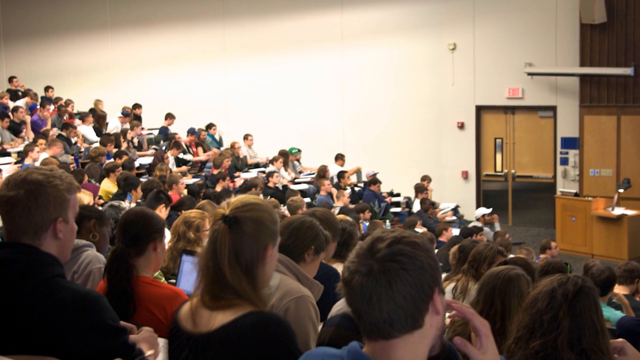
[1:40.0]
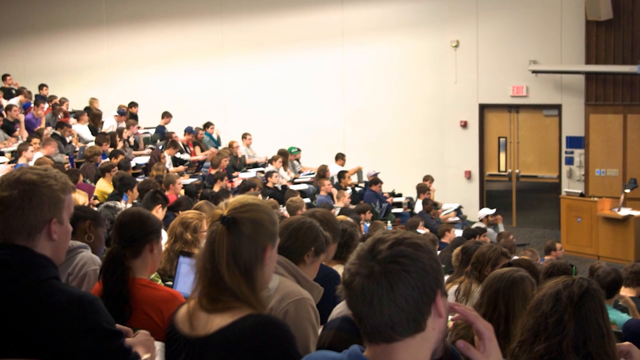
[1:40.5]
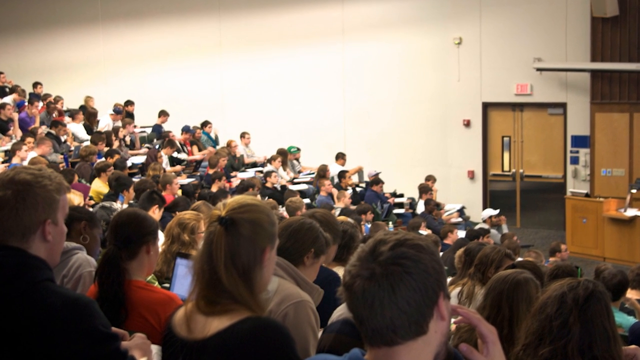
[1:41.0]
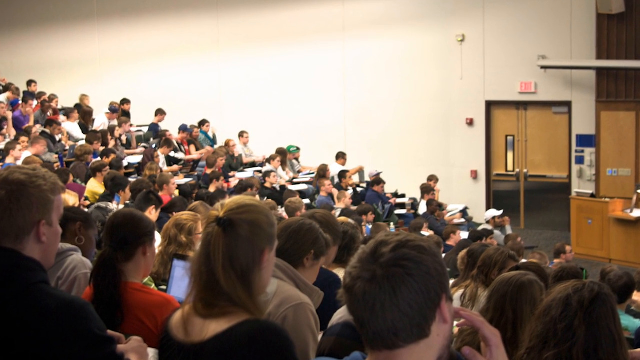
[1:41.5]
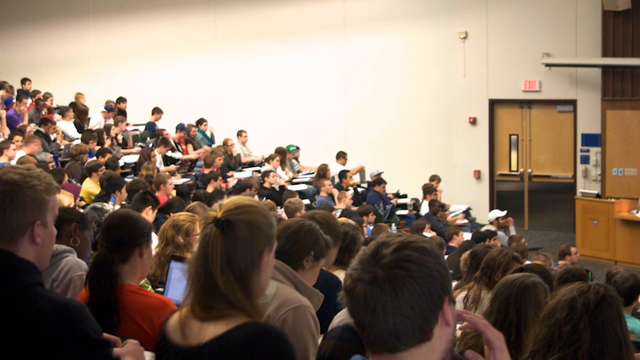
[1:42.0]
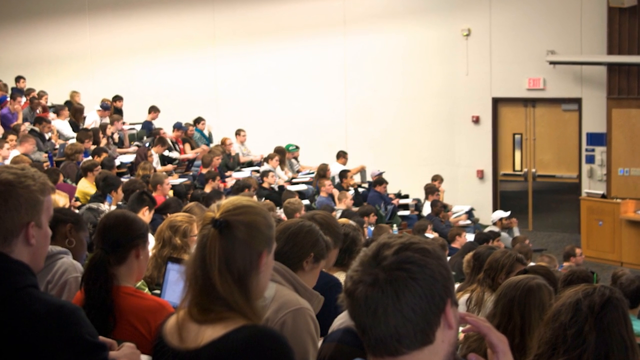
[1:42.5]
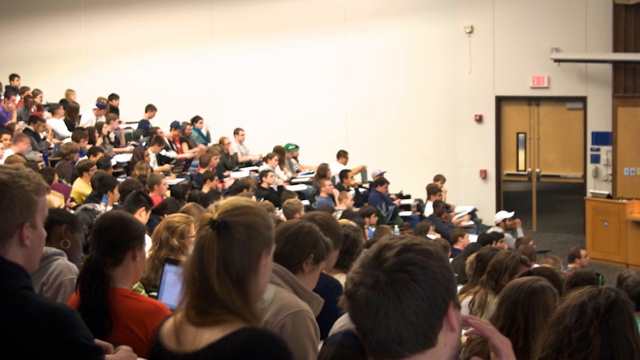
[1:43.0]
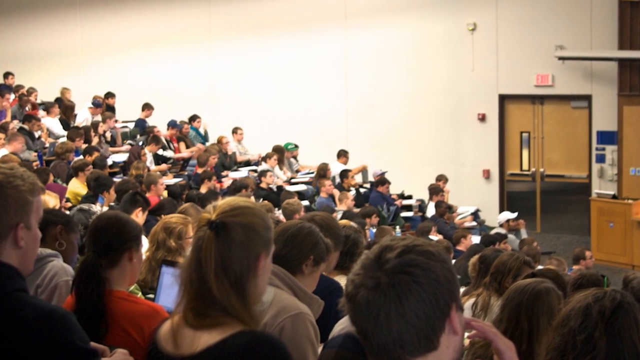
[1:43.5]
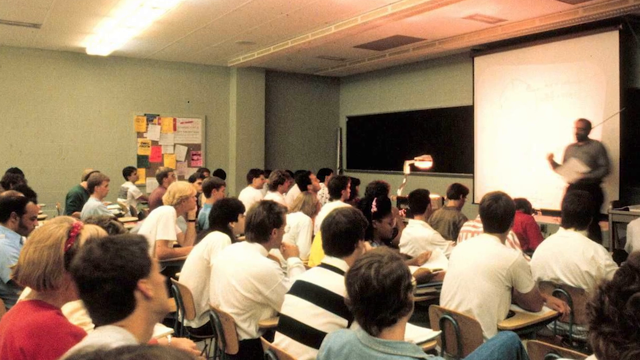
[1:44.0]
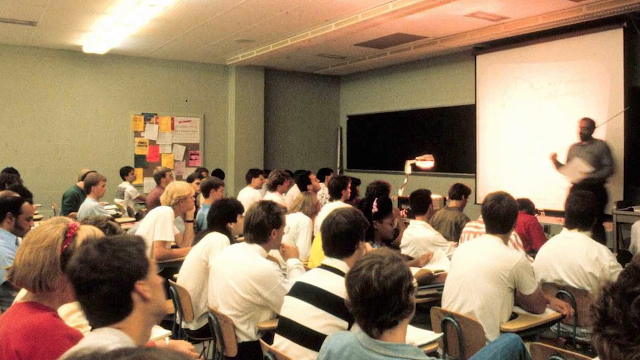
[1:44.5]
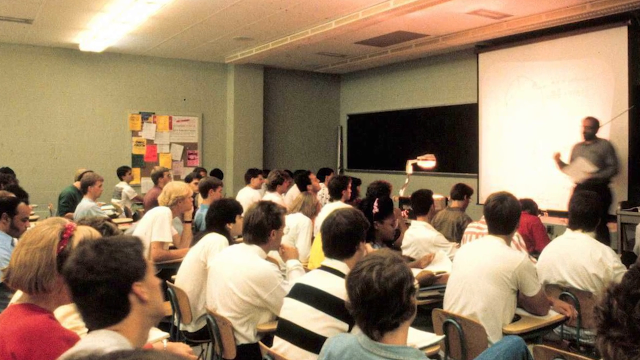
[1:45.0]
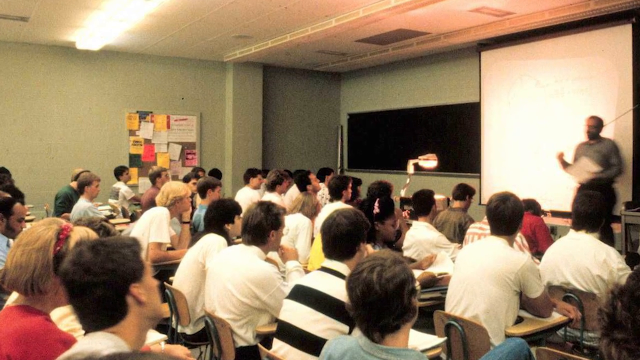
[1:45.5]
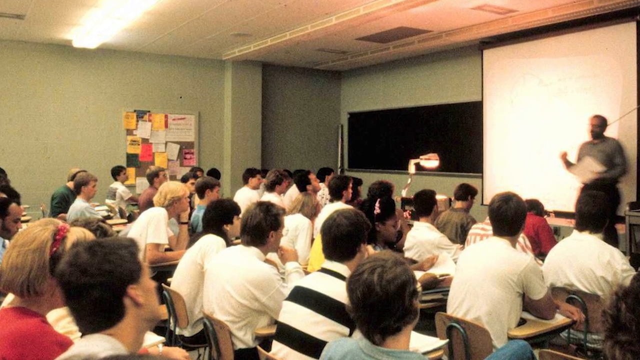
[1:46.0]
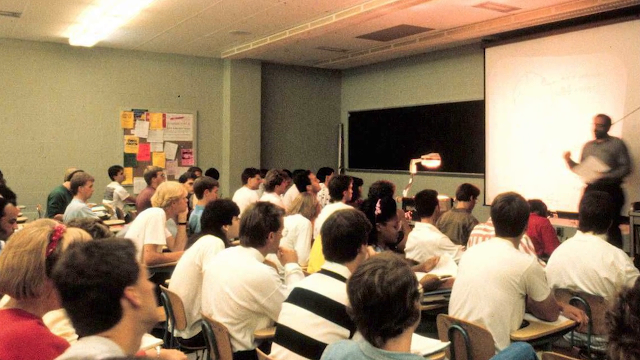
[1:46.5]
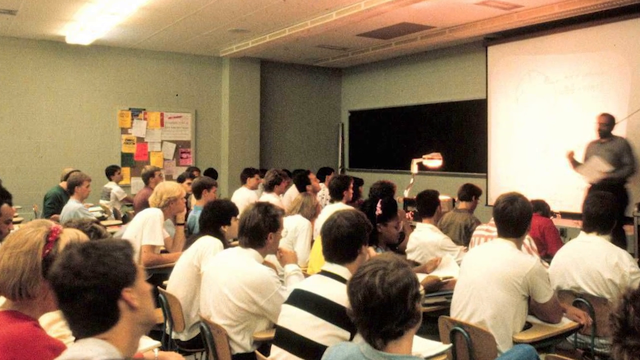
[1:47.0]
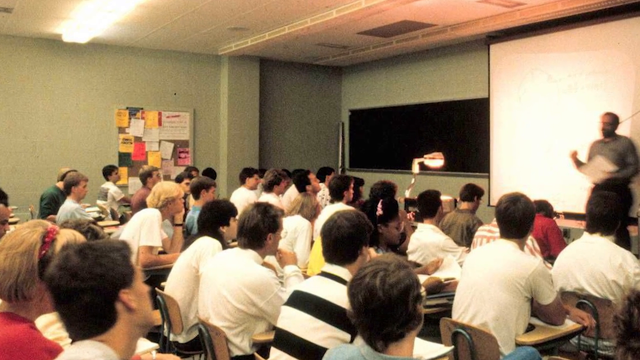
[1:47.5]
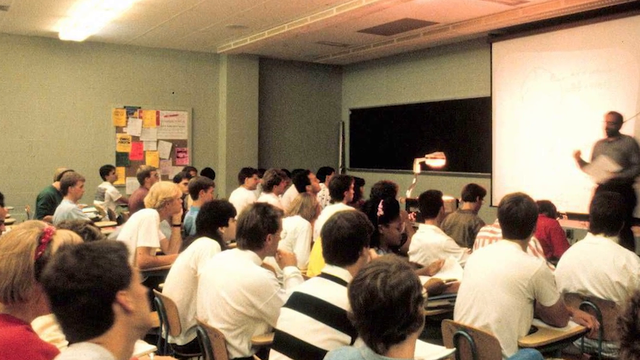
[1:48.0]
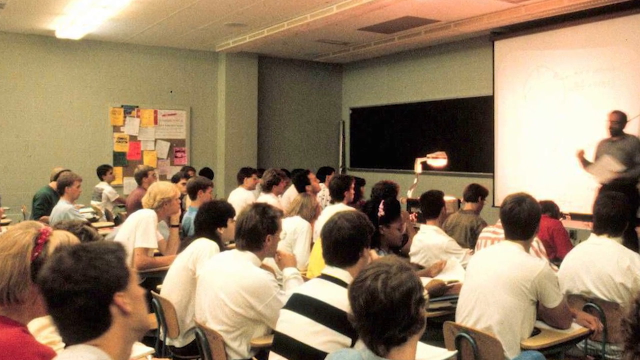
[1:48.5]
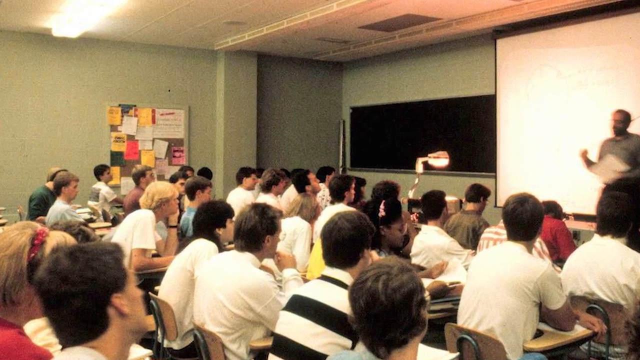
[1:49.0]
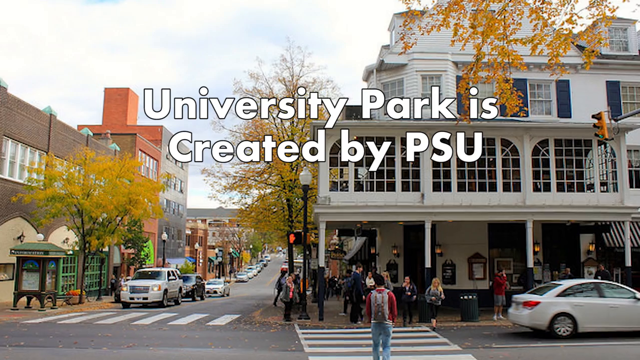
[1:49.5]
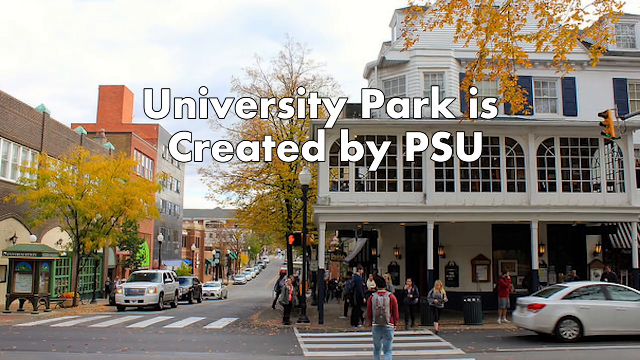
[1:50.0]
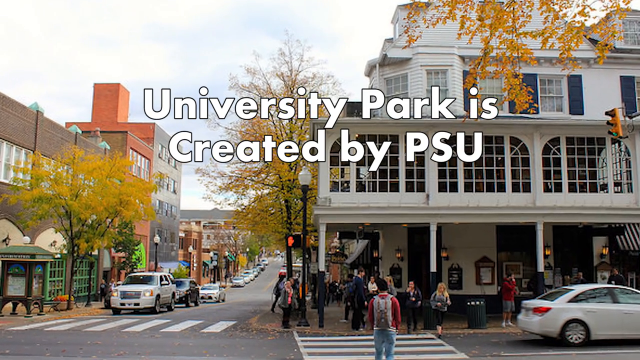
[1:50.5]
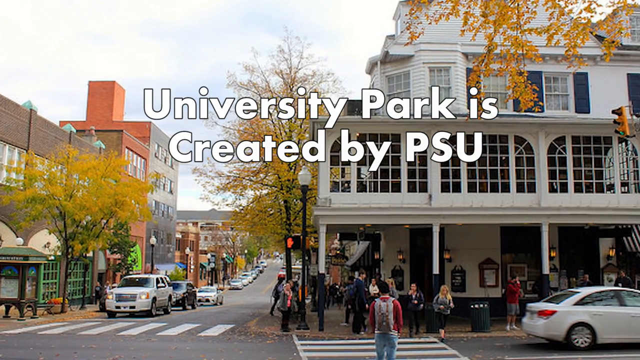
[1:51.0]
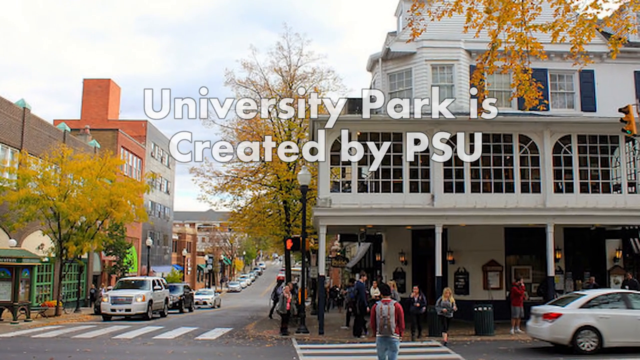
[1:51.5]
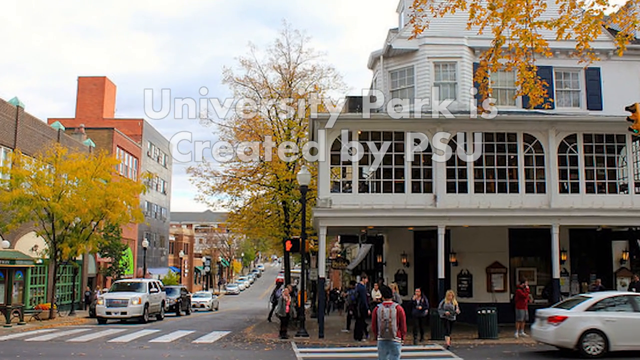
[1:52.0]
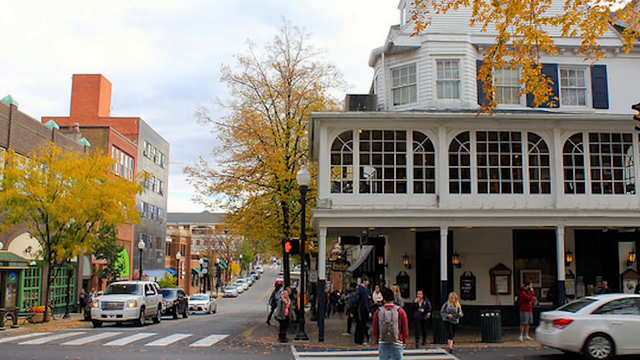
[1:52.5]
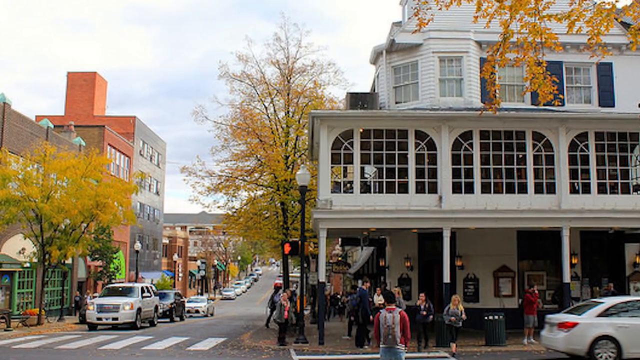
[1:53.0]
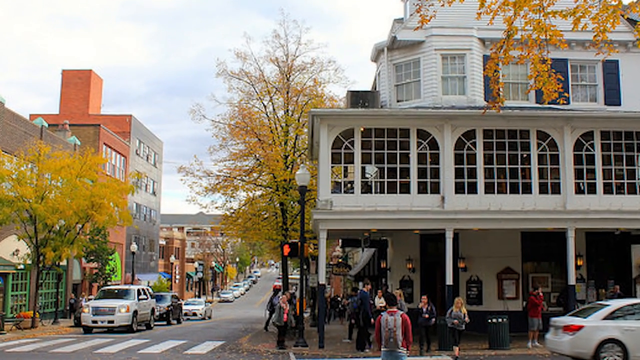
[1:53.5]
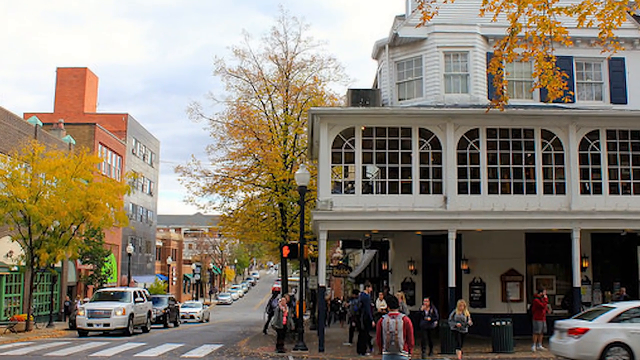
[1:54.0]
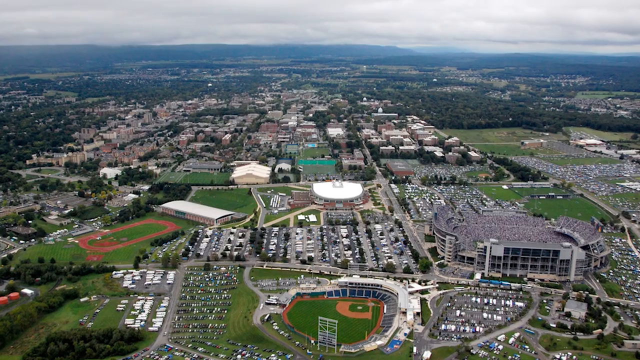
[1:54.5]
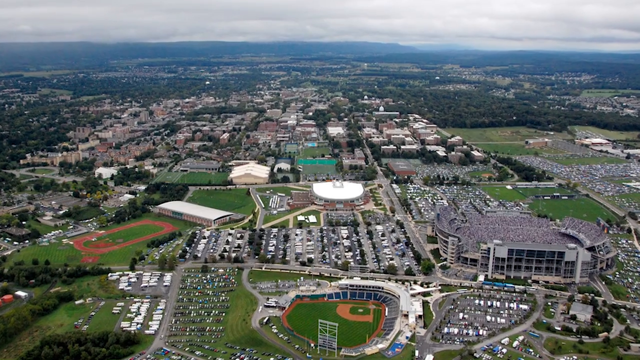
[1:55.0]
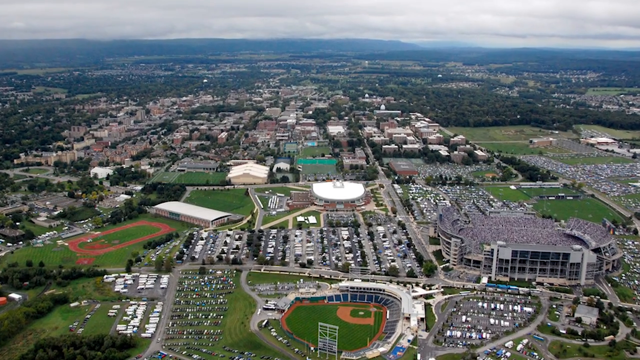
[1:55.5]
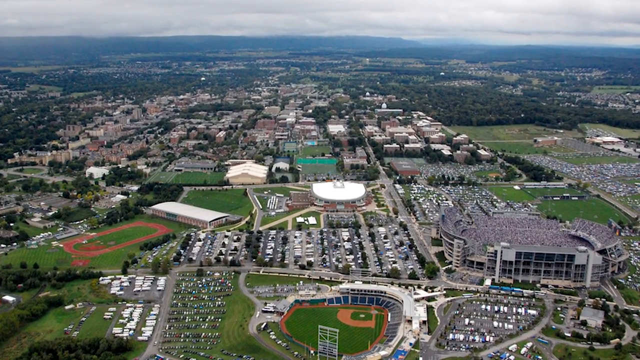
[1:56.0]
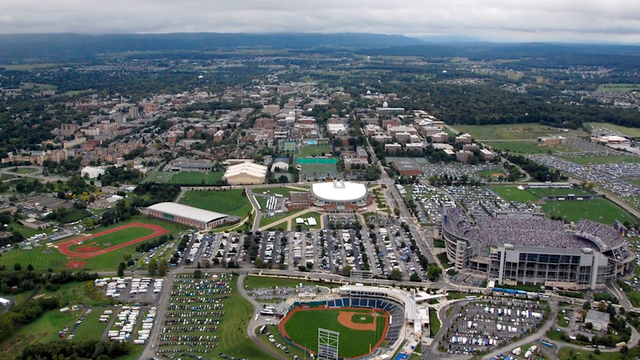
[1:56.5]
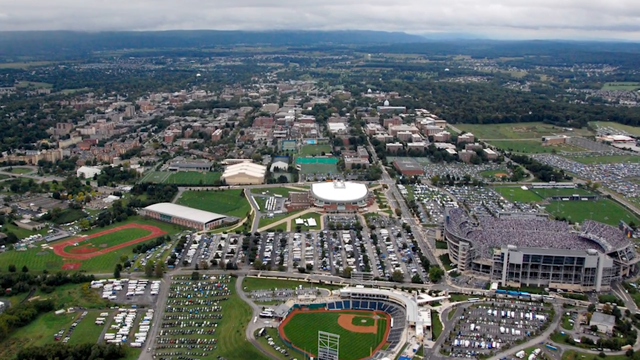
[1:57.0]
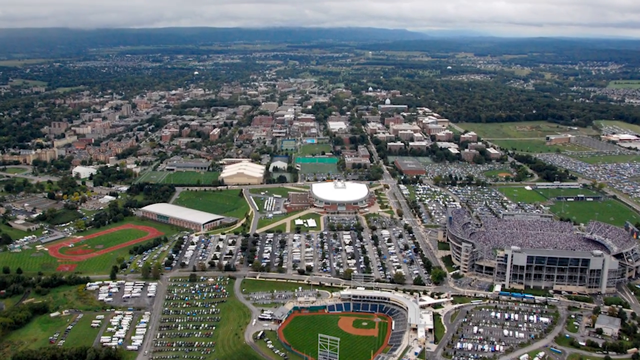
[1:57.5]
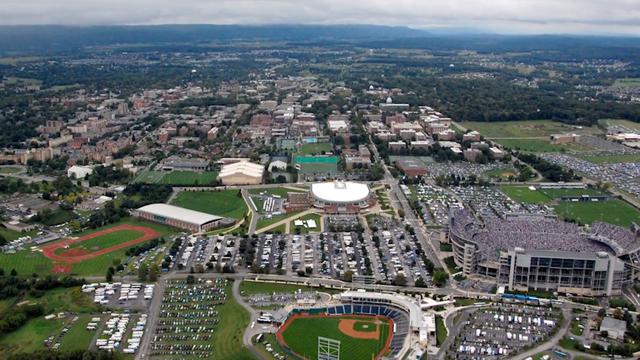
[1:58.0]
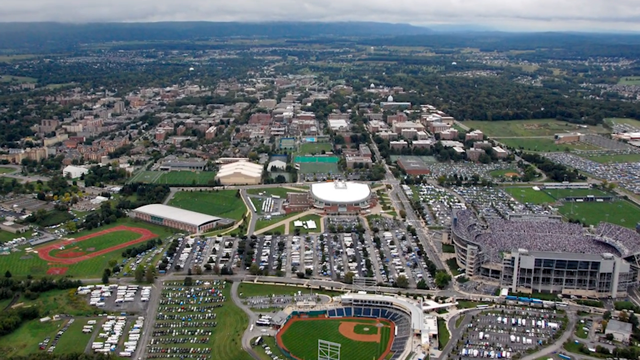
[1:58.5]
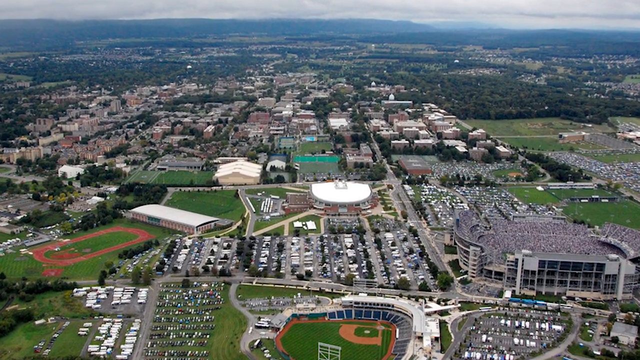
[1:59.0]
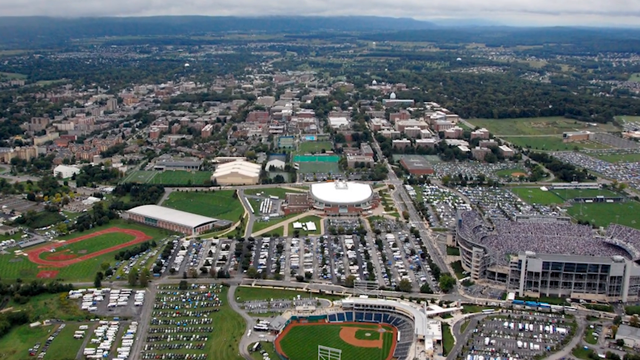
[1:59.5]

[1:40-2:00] A classroom full of students learning is shown, and the images change to show different classrooms where students are learning. Next, the university park appears, with writing indicating it was created by PSU. The camera gets closer, and then the area is seen from above, as if from a drone, showing the whole area and the entire rows of the university from the sky.